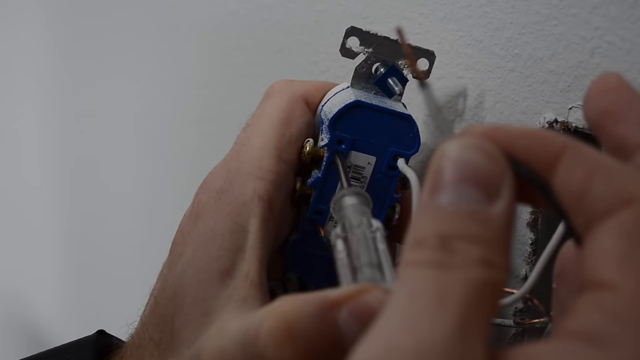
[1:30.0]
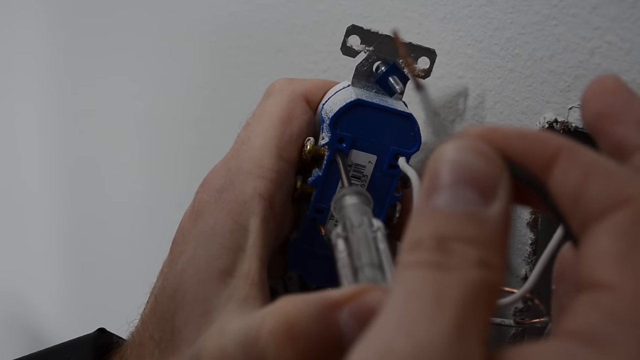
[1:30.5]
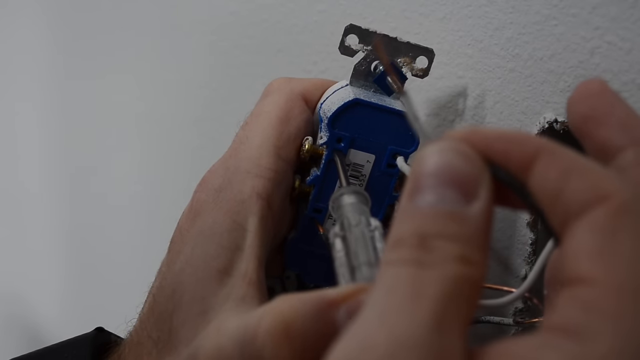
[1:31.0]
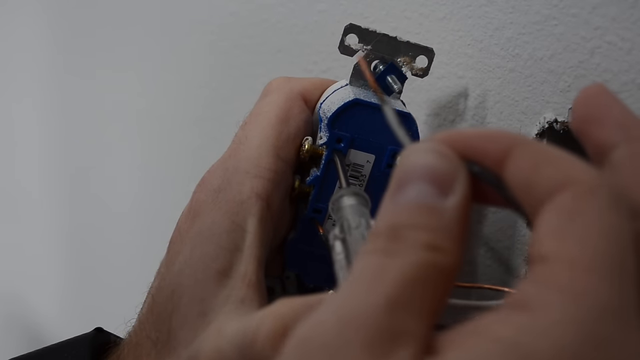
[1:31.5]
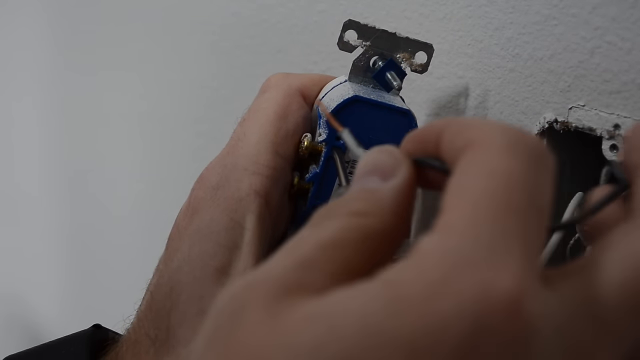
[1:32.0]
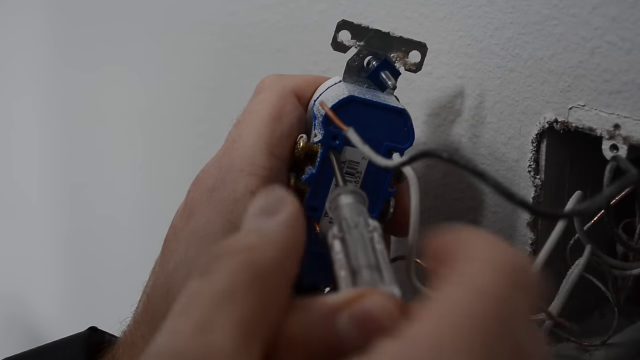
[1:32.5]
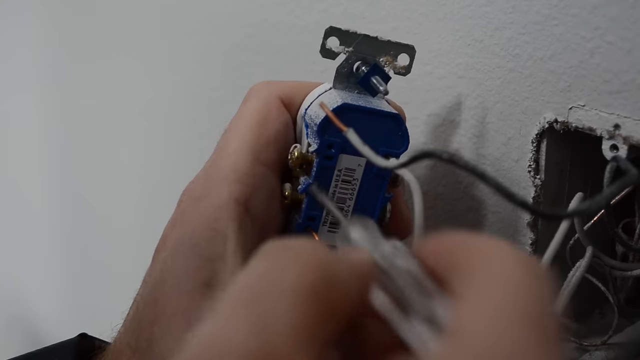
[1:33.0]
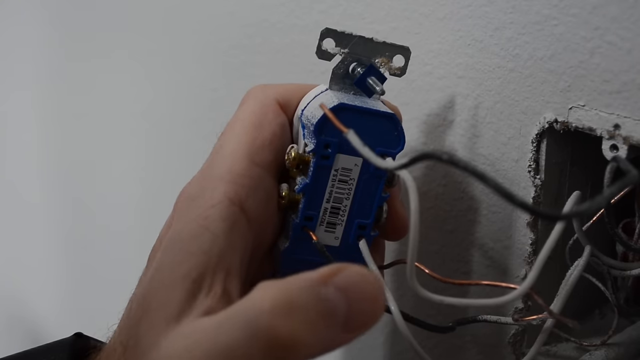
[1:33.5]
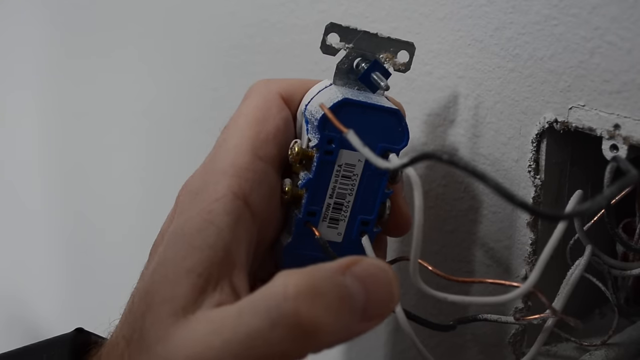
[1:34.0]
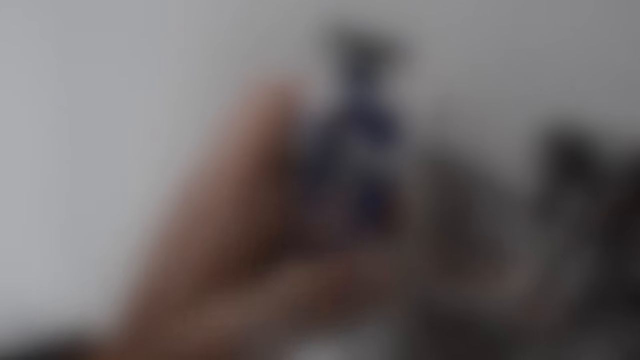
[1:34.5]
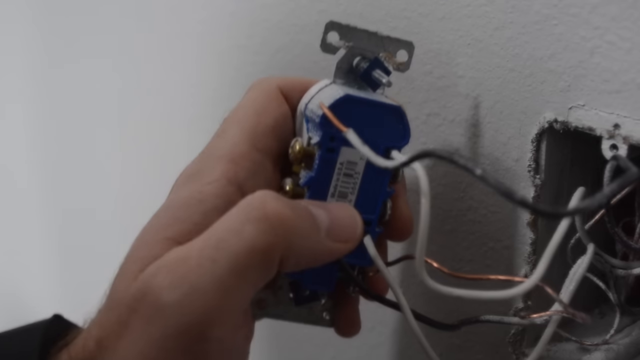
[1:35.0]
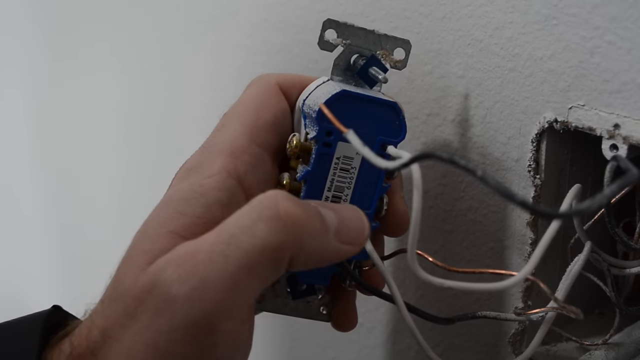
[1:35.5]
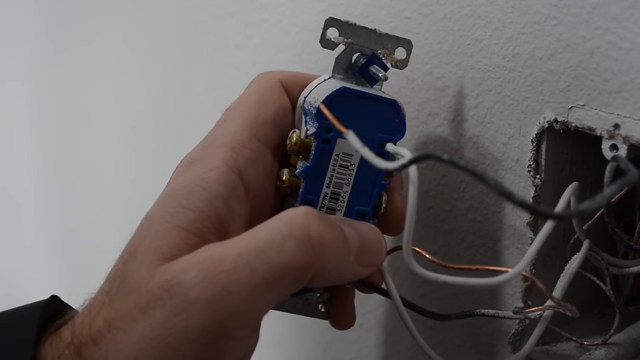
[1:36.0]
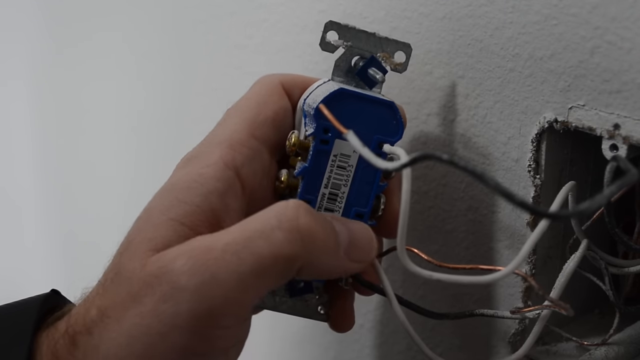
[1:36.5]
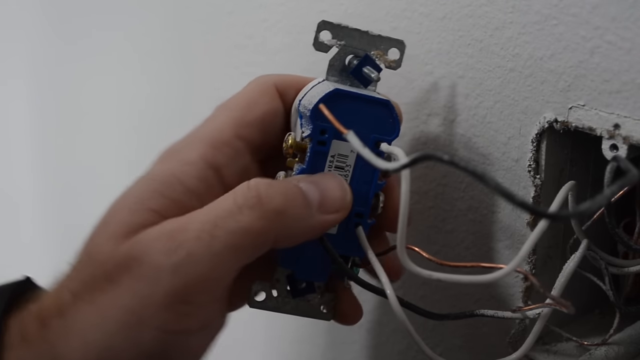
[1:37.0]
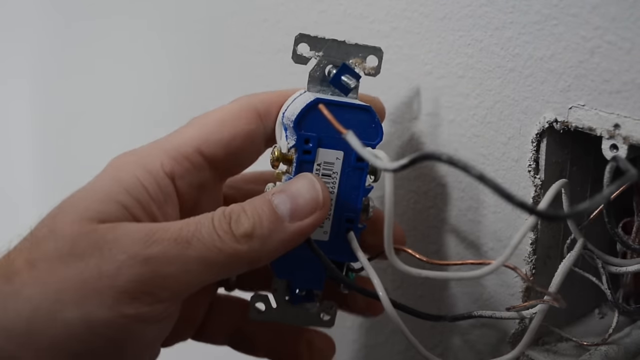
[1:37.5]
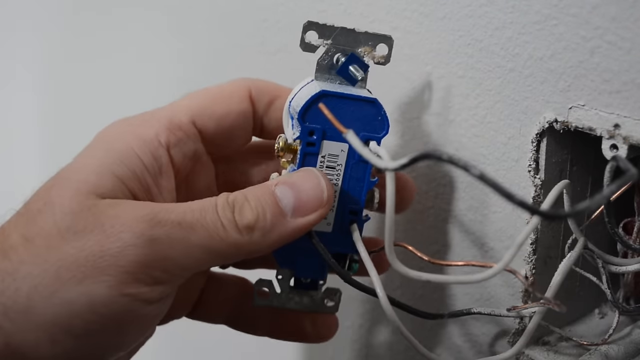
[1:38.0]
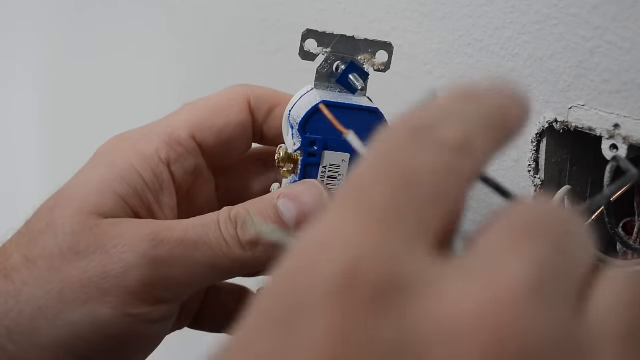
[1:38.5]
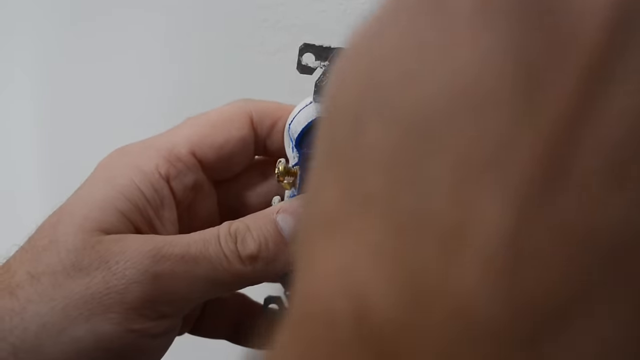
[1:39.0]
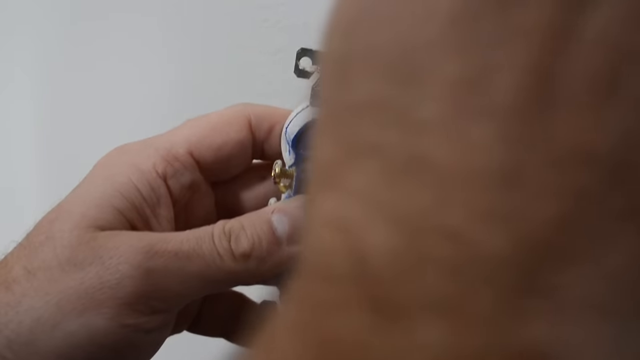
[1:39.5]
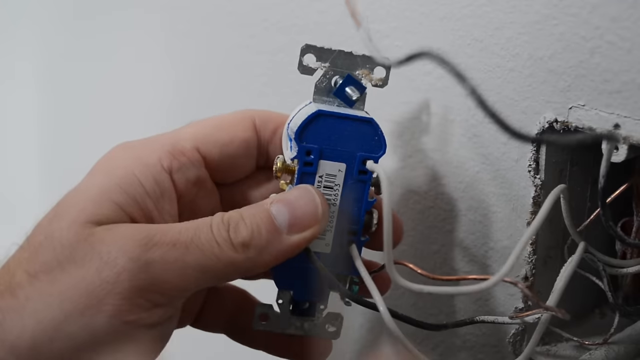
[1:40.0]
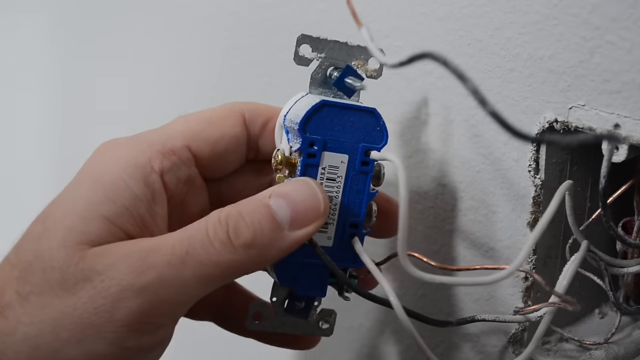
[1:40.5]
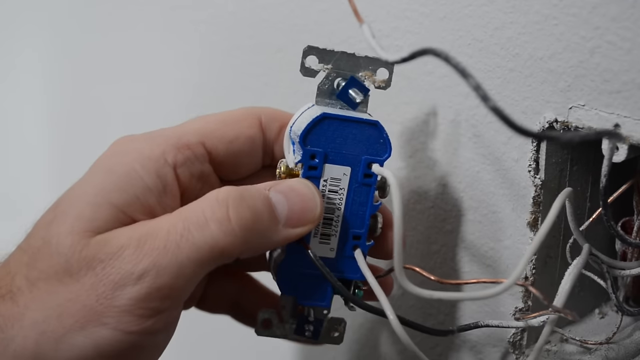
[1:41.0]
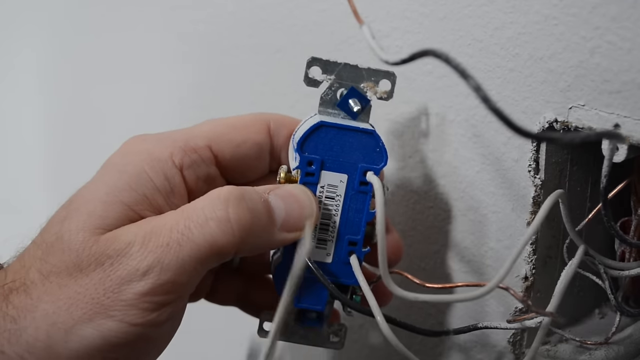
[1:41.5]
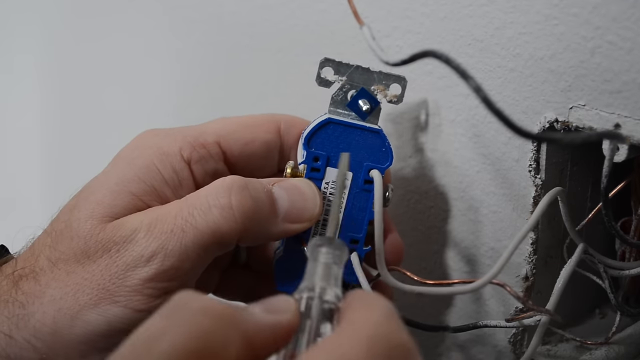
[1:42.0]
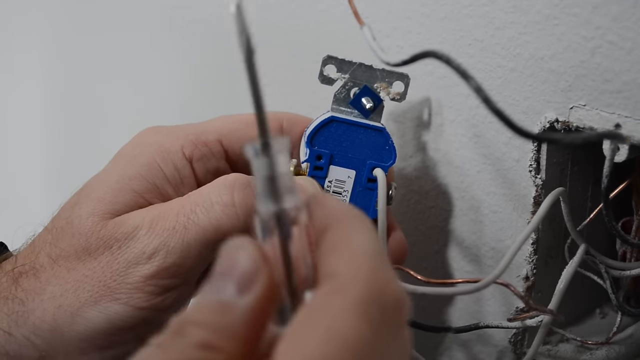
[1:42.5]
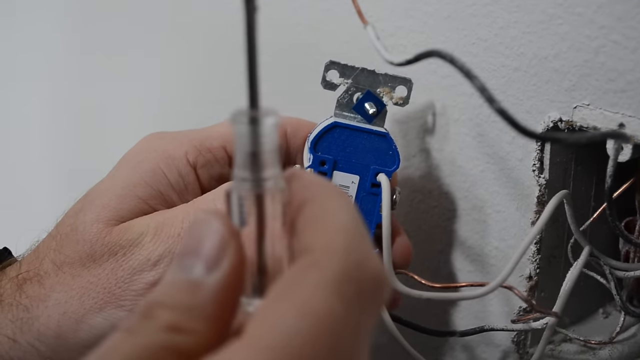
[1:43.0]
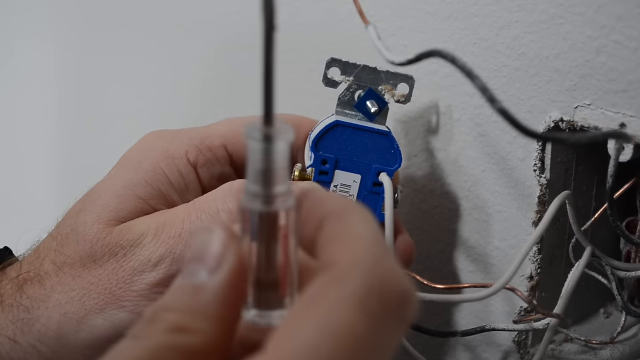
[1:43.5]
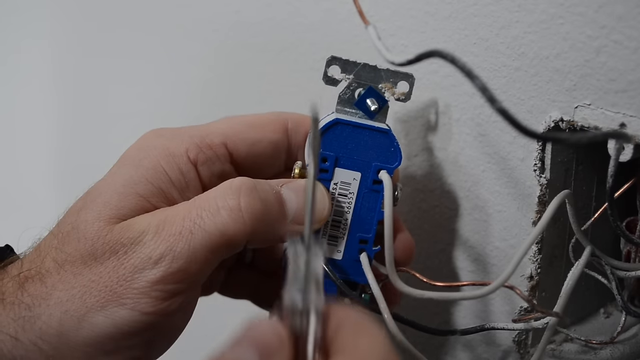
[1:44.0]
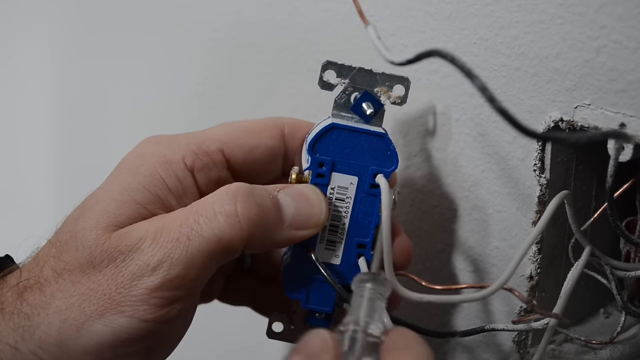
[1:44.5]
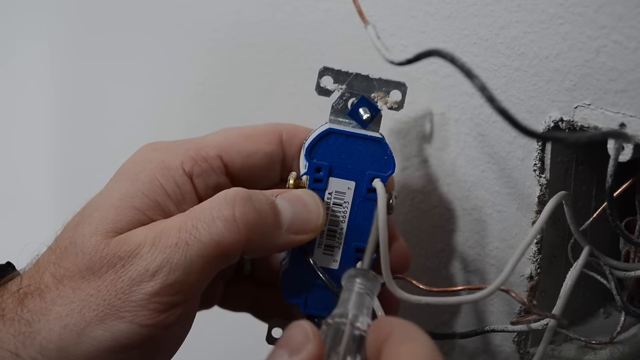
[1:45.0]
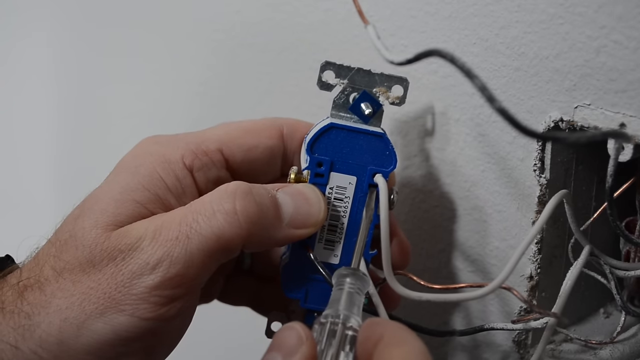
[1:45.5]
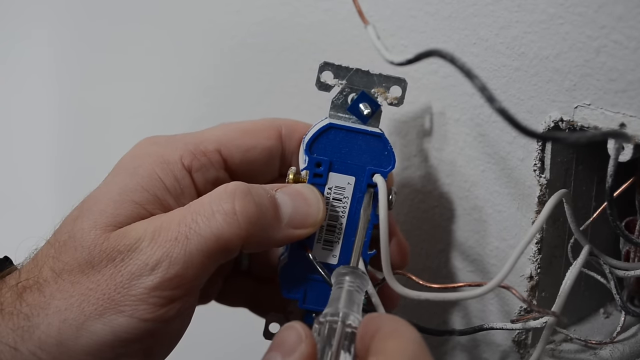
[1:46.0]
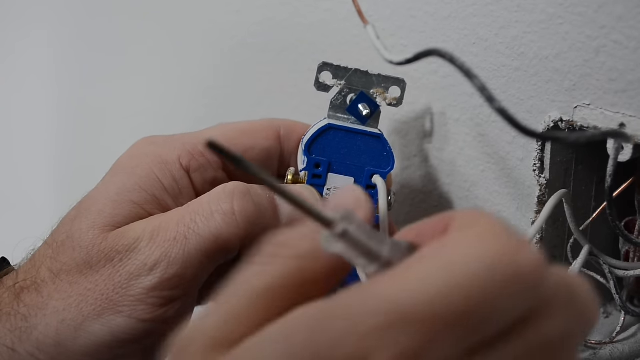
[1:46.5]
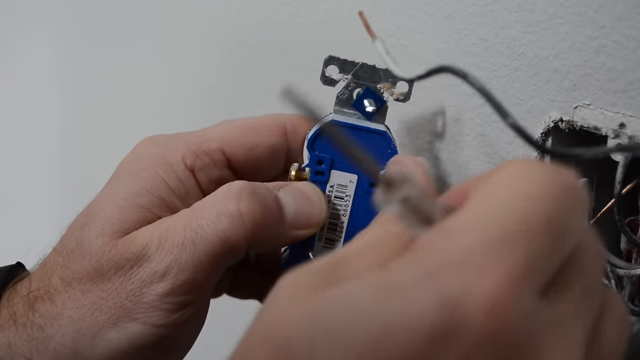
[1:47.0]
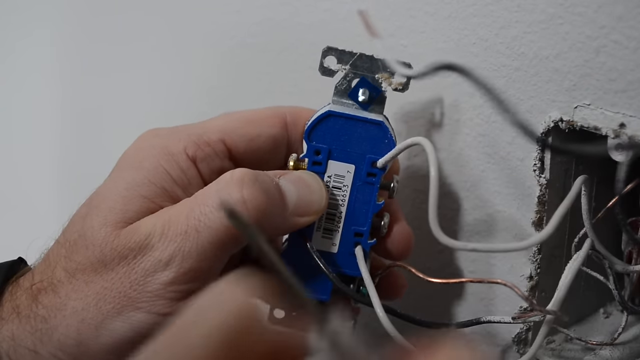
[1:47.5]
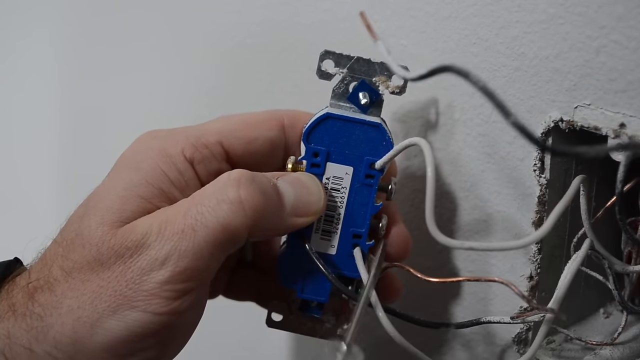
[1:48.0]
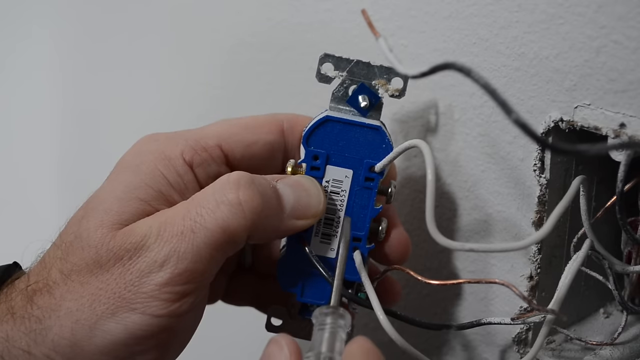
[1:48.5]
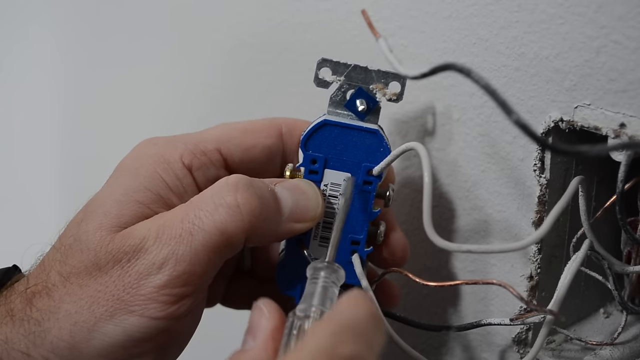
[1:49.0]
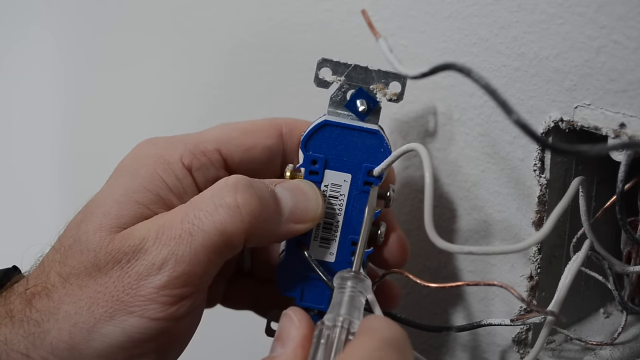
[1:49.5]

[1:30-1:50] The man moves on to the second wire: he puts the screwdriver inside the hole of the wire and, with the screwdriver in, takes the wire out. He keeps showing the size of the screwdriver and the hole where it goes.